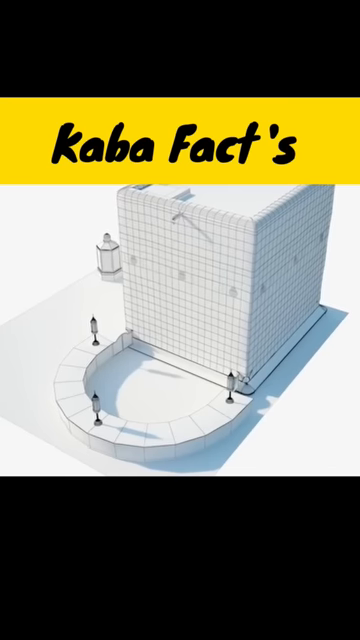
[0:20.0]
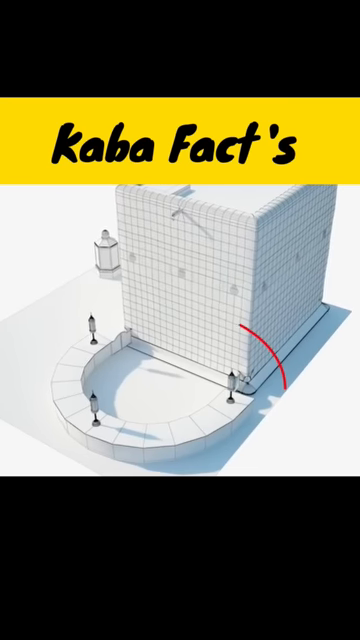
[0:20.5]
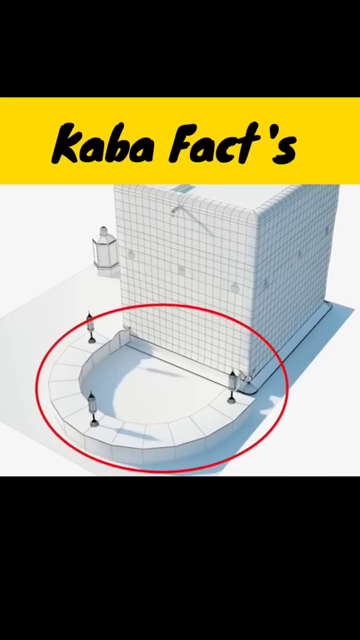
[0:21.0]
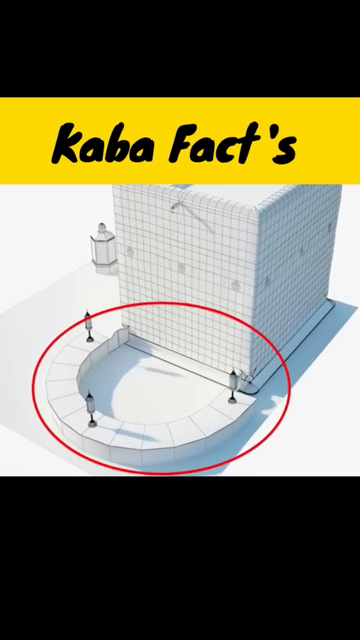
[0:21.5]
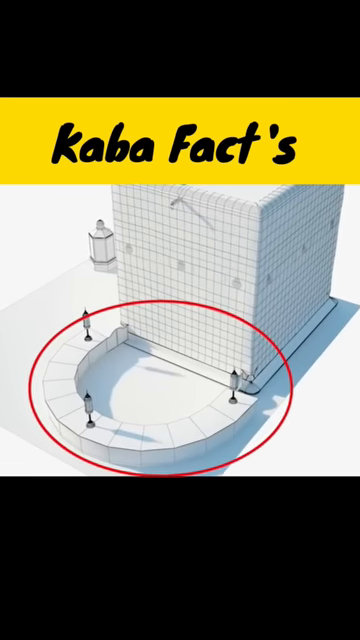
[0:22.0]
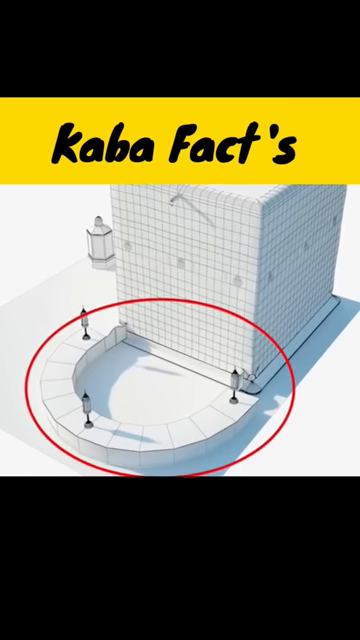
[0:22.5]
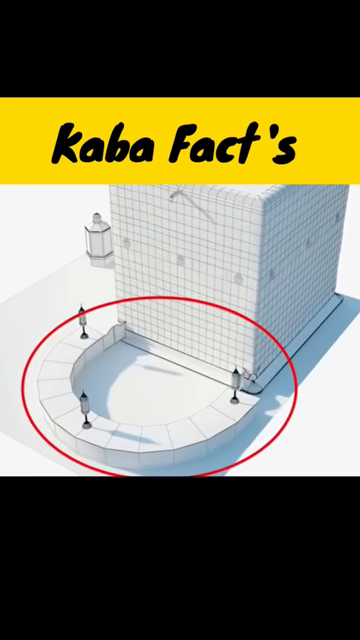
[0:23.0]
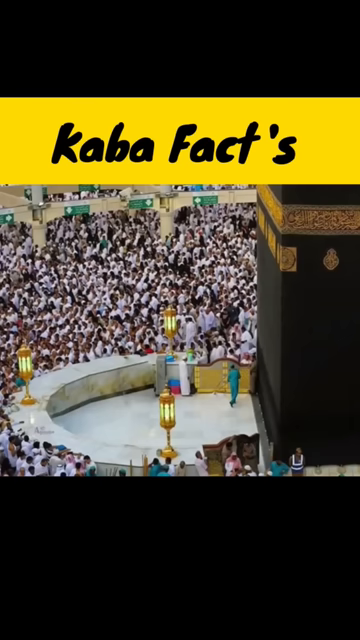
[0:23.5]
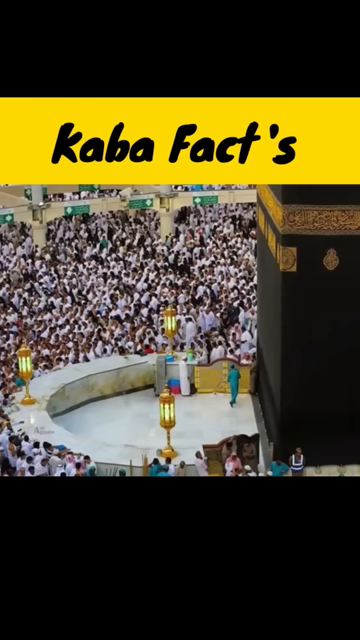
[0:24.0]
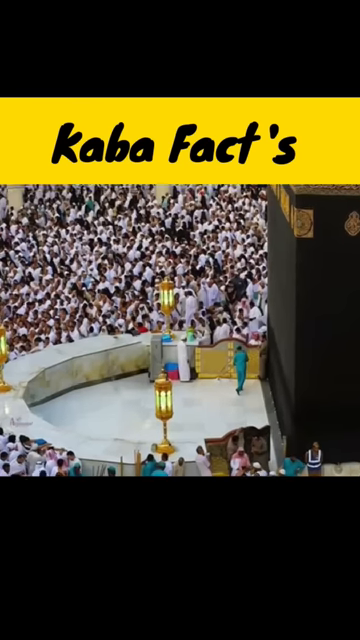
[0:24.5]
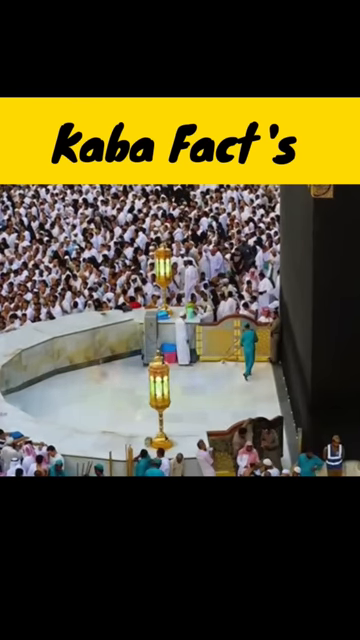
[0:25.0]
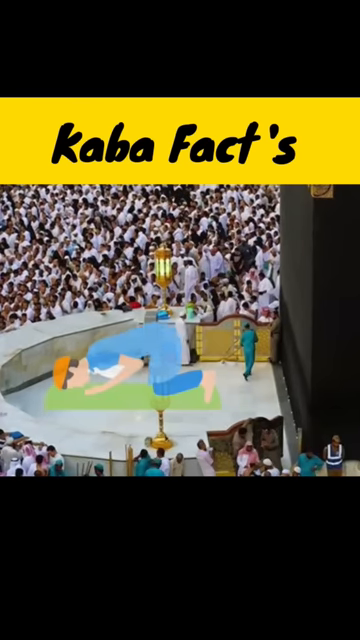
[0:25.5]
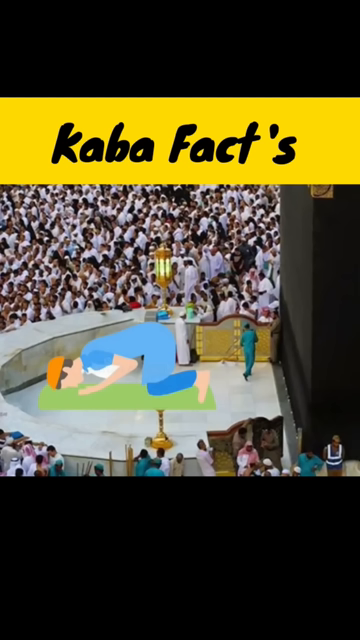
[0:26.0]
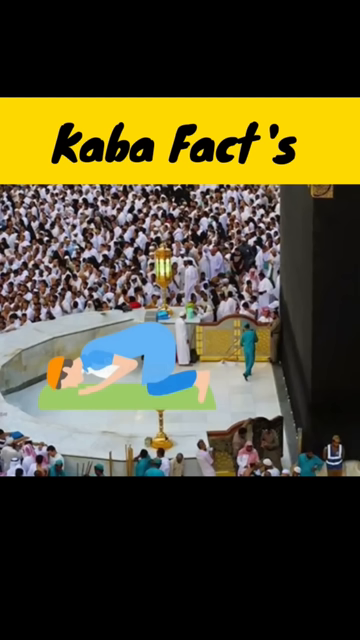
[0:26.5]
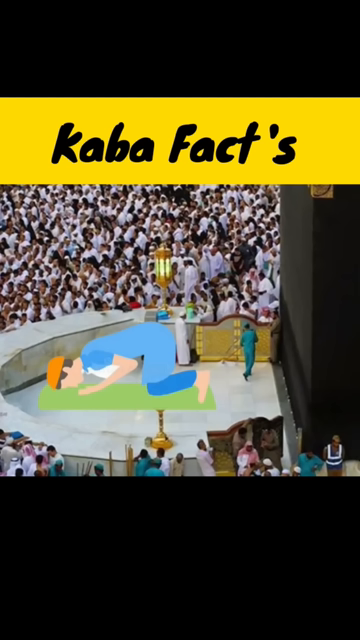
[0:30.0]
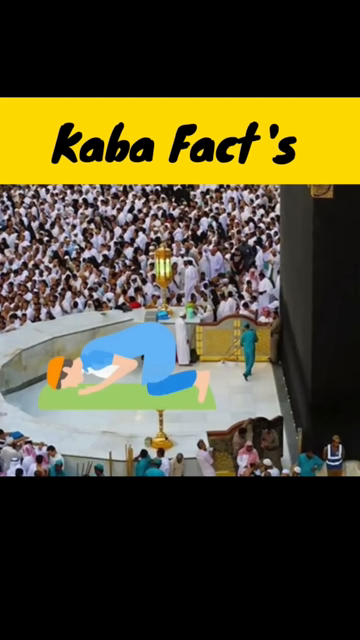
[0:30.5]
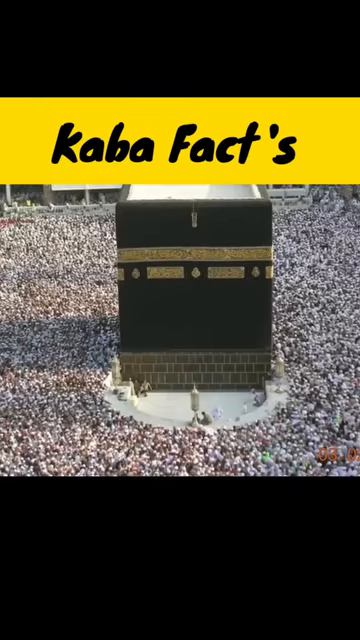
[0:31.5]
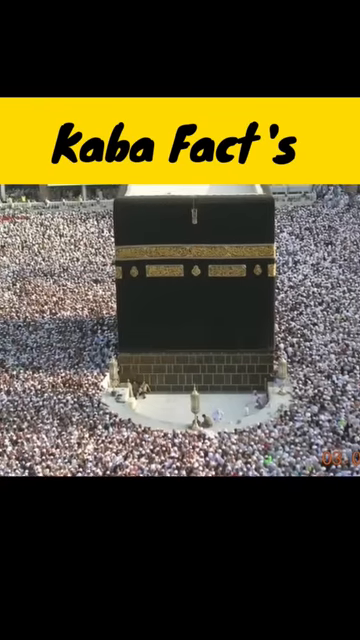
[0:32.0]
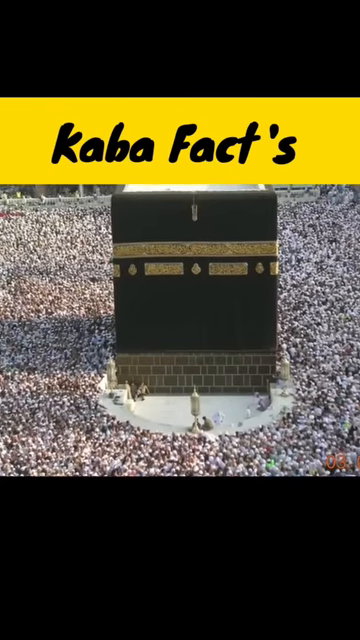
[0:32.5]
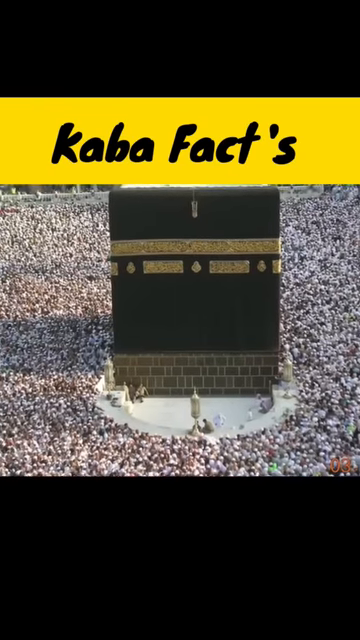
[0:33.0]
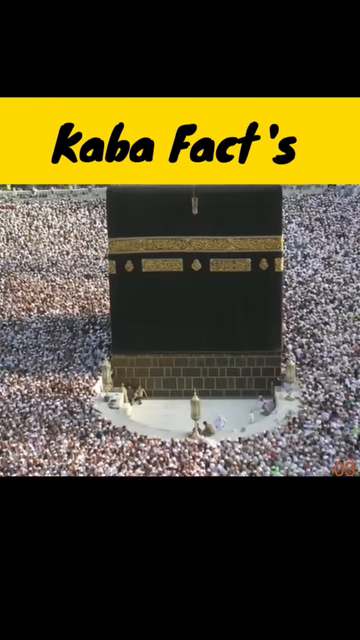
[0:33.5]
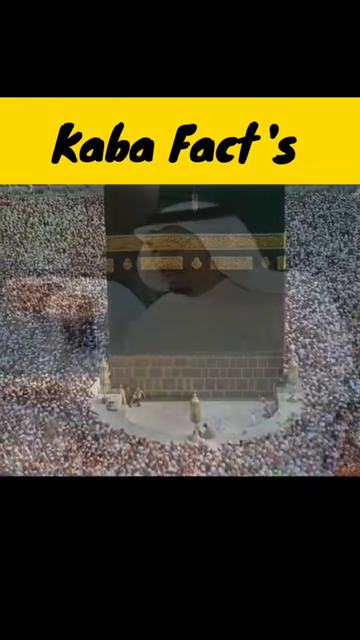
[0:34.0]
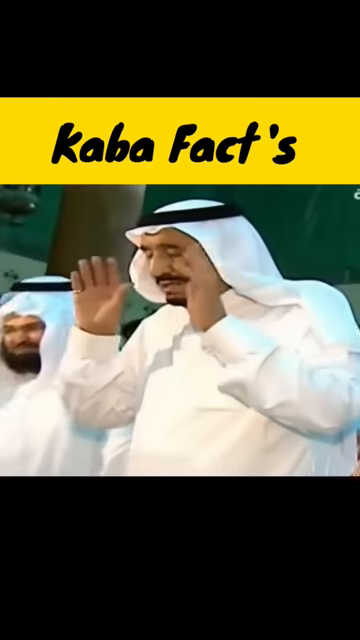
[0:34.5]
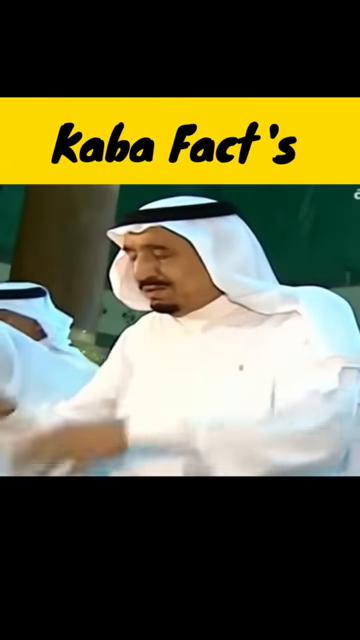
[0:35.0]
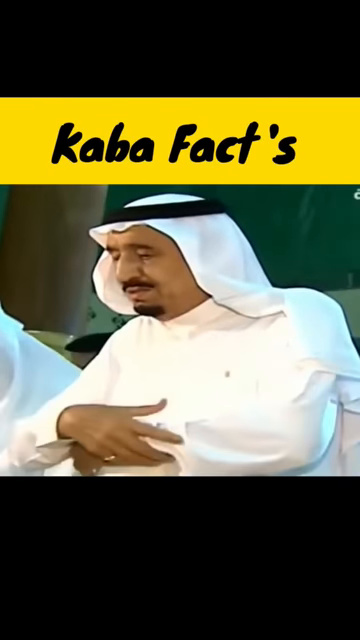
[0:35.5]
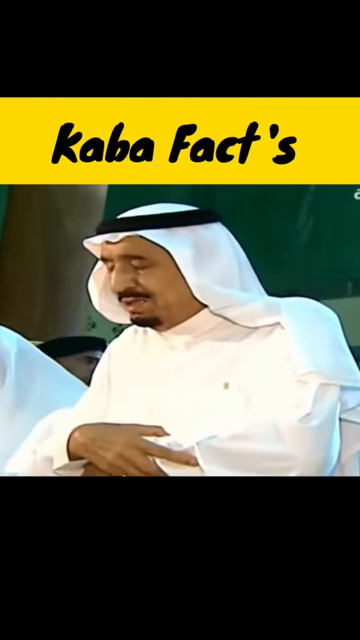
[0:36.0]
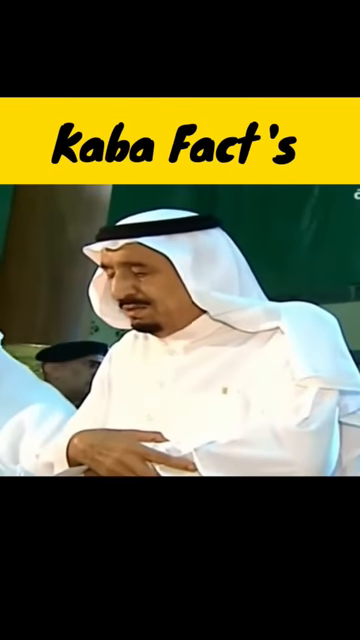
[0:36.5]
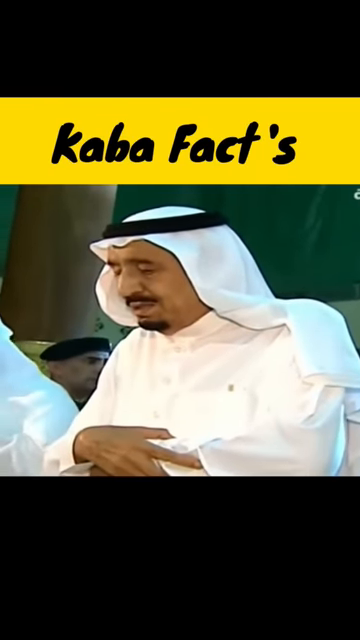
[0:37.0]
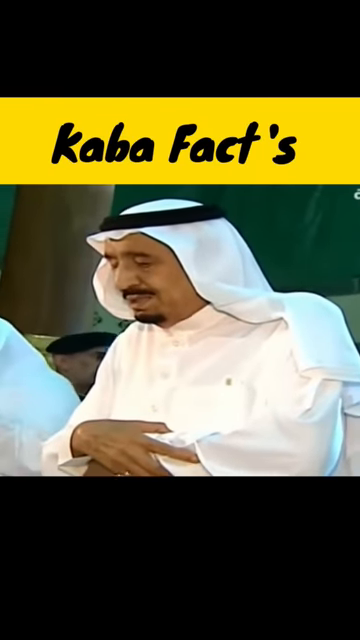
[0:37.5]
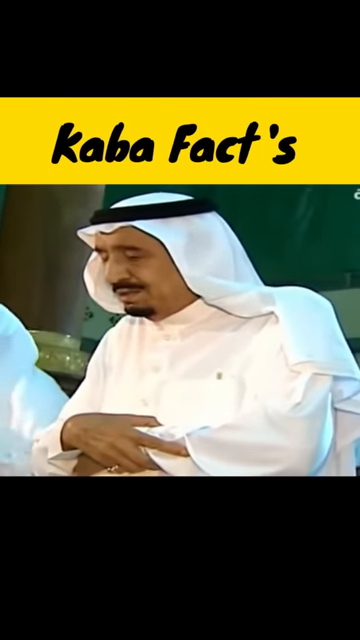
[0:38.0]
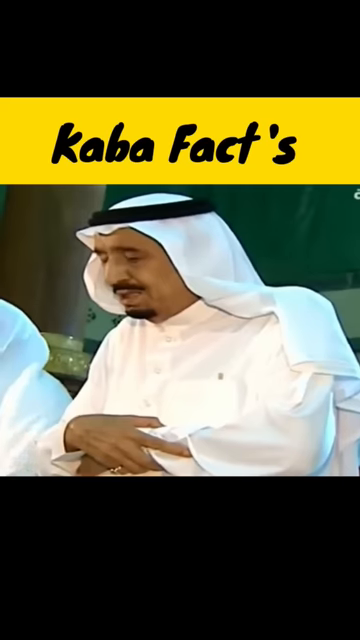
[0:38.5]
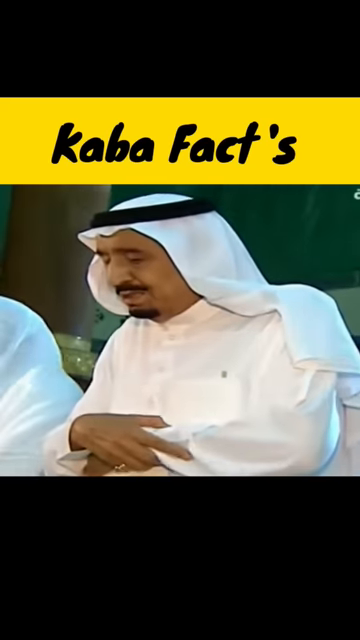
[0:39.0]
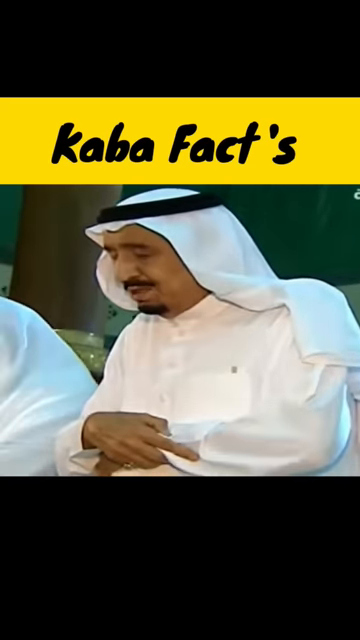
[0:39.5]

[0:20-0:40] The white image turns out to be a big square white building with lines running up and down and what looks like a couple of windows. It is kind of hard to see because it is still inside the small square in the middle of the video. In front of it, to the left and front, there is something like a half circle that comes out, with a little dipped-in place that has a red circle drawn around it. There is a white fixture at the front. It then cuts to what looks like a giant man in blue, like a drawing, with an orange hat, laying on the ground with his head to the left and body to the right. All around him, at the top, around the left side and along the bottom, there are just outlines of people's heads that cannot really be made out. On the right side of him is the big black square structure. The yellow banner at the top still reads "Cabez facts". It then cuts to a wide shot of the big black building with a sea of people all the way around it on every side, so many that the ground cannot be seen. They are all kind of walking in a circular motion around it. Then it cuts to a man dressed in all white with a big black ring around the top of his head and a white hood pulled over. His eyes are closed and he is doing some sort of religious chanting, moving his hands a little.